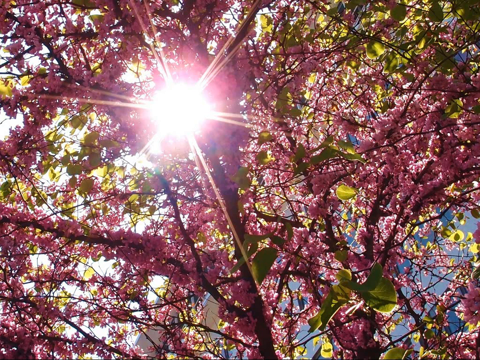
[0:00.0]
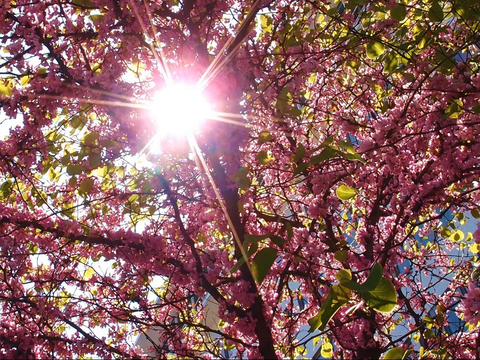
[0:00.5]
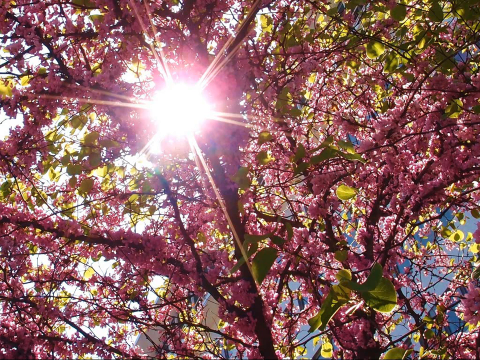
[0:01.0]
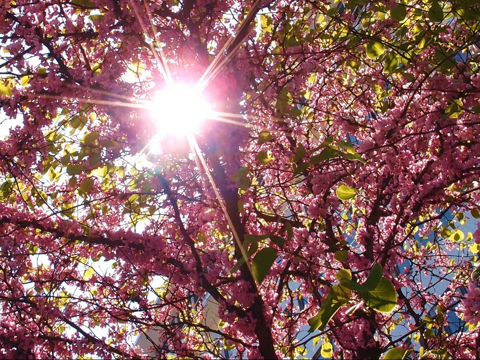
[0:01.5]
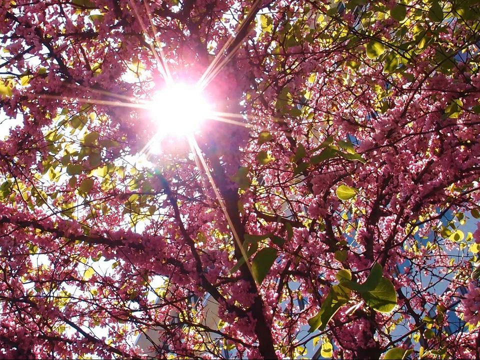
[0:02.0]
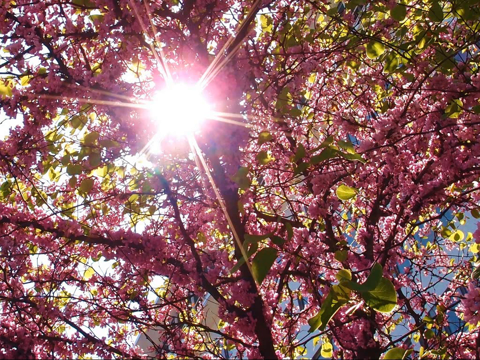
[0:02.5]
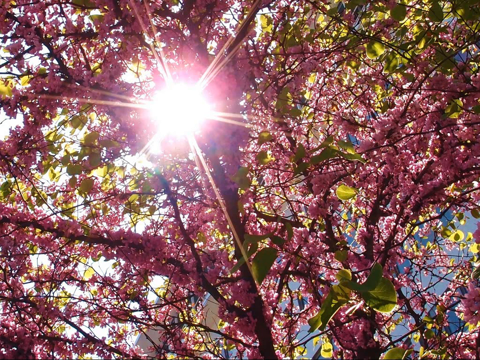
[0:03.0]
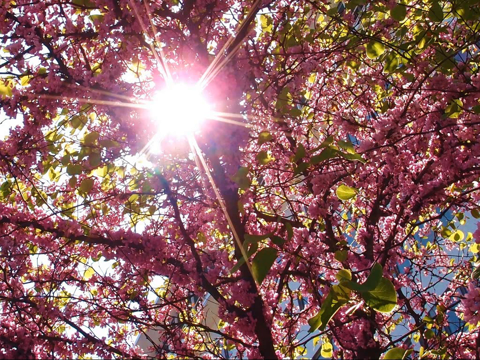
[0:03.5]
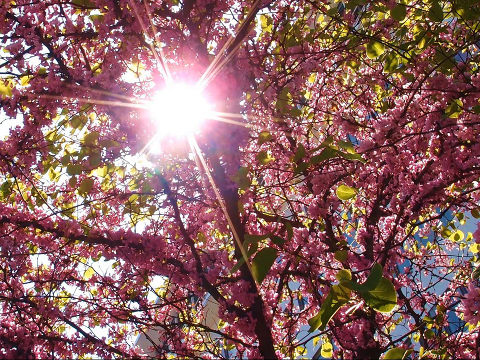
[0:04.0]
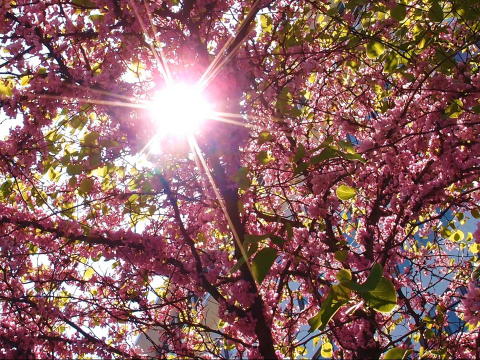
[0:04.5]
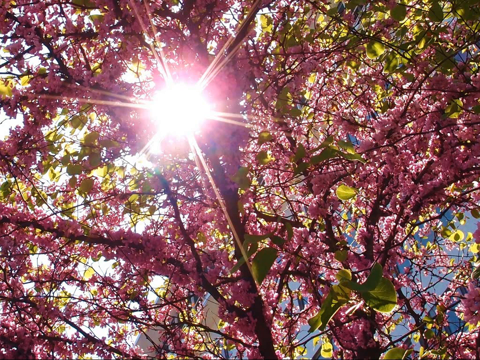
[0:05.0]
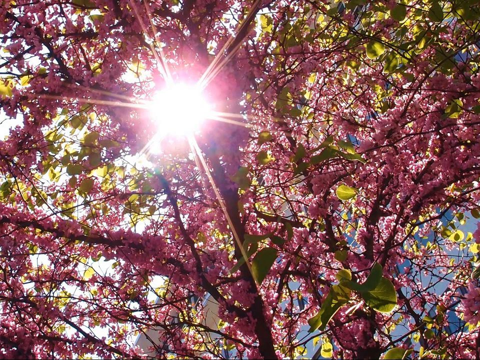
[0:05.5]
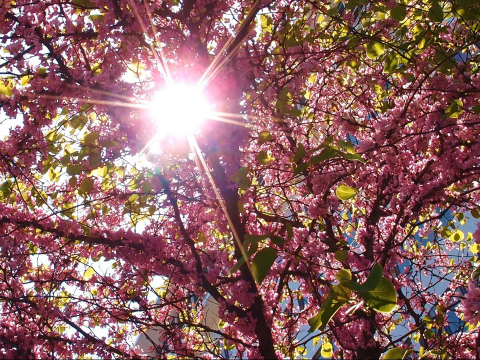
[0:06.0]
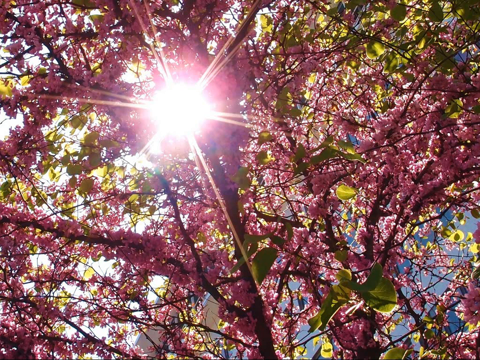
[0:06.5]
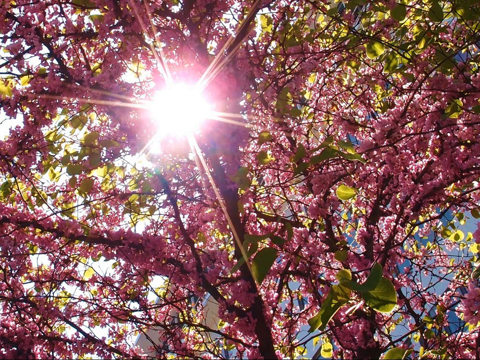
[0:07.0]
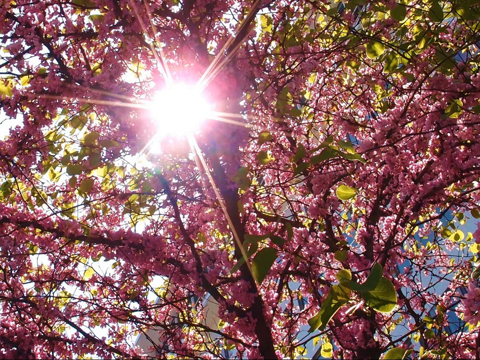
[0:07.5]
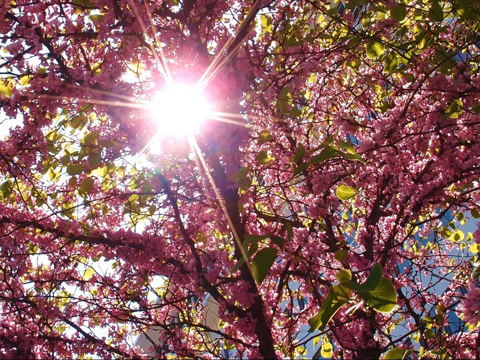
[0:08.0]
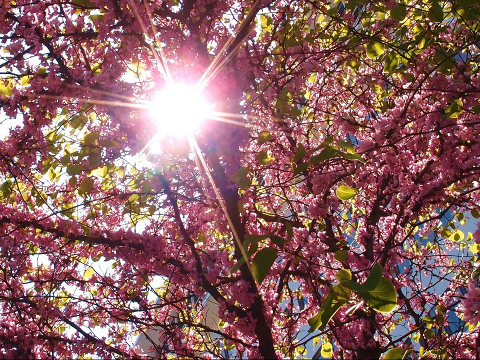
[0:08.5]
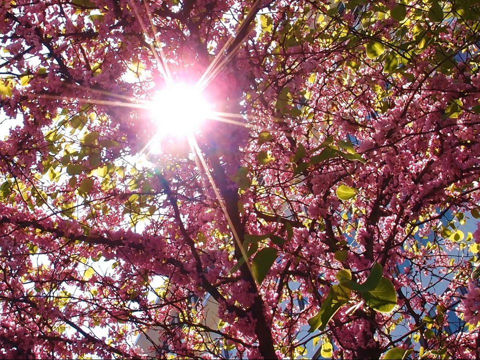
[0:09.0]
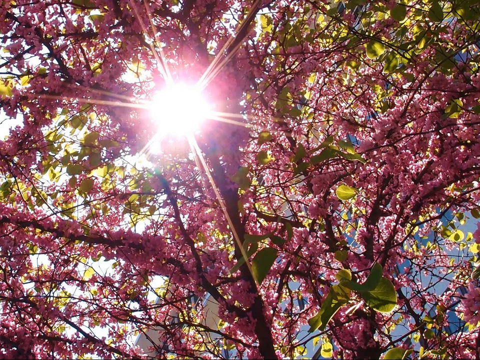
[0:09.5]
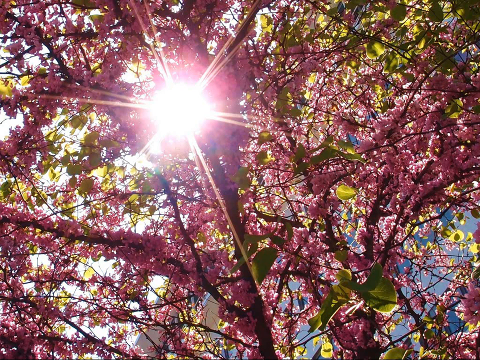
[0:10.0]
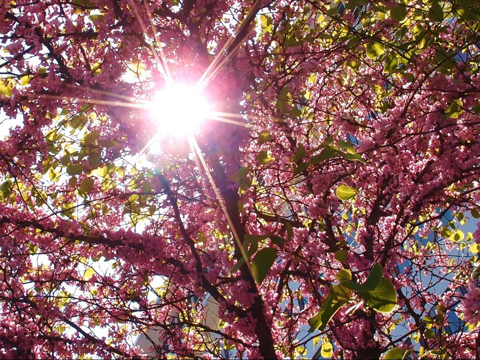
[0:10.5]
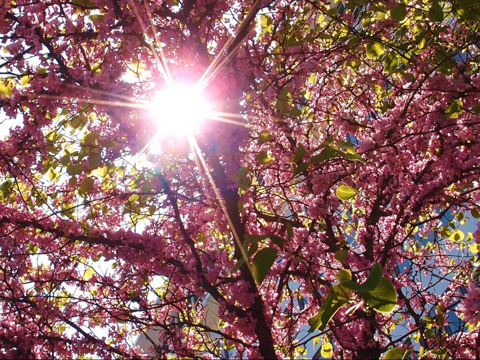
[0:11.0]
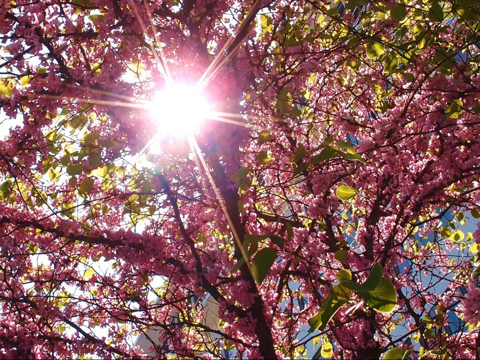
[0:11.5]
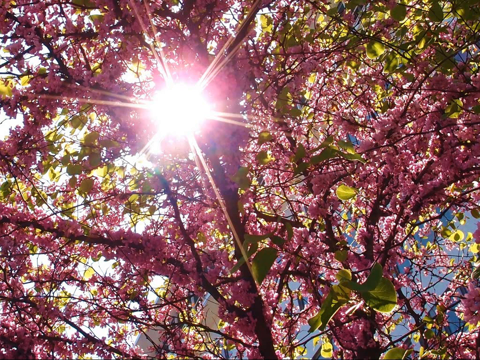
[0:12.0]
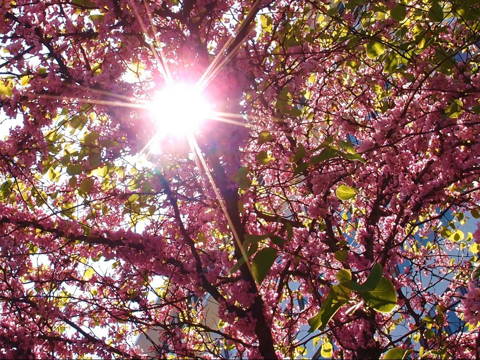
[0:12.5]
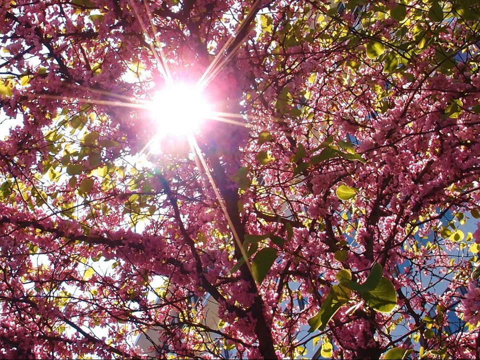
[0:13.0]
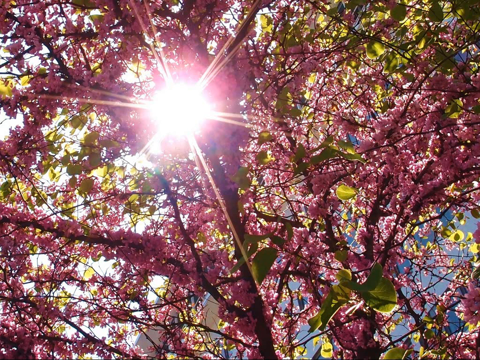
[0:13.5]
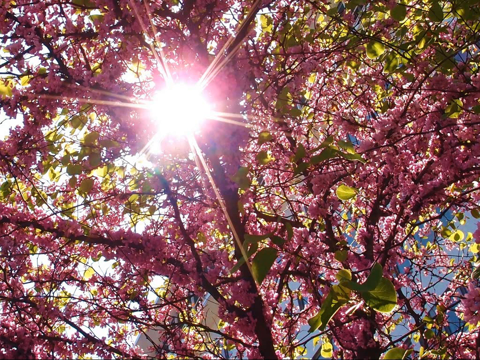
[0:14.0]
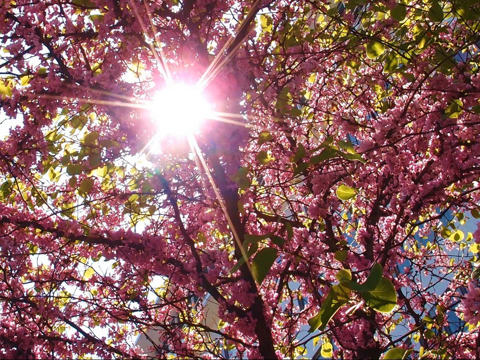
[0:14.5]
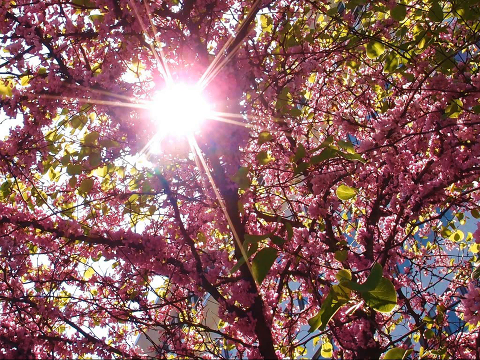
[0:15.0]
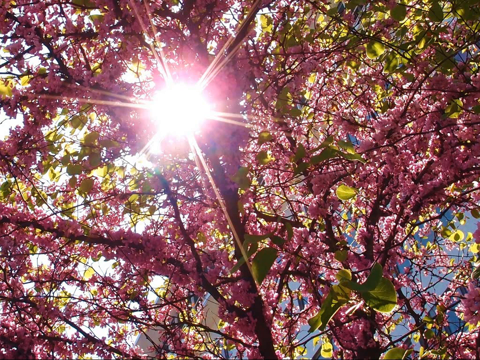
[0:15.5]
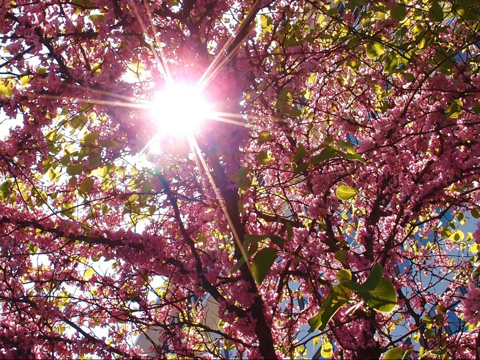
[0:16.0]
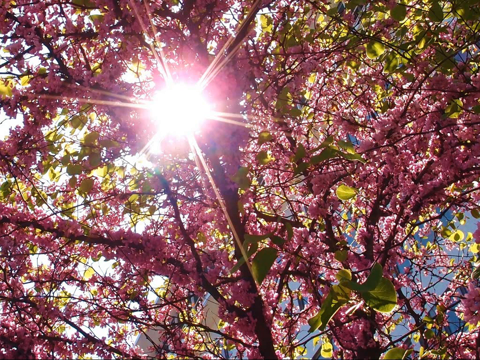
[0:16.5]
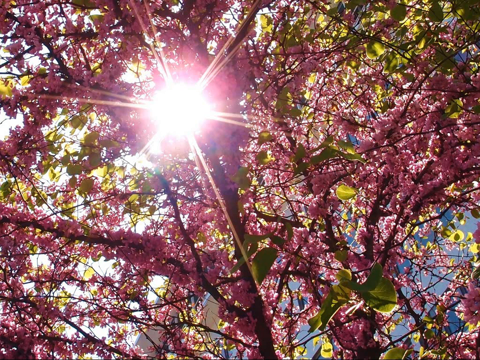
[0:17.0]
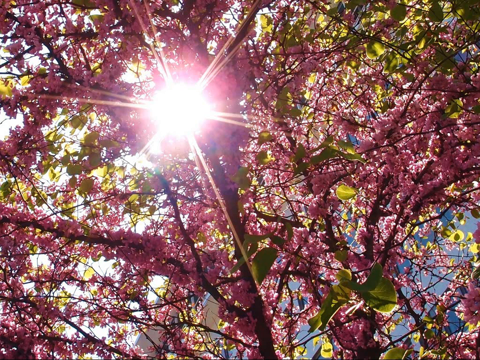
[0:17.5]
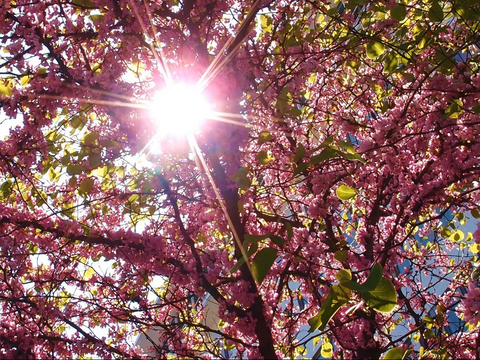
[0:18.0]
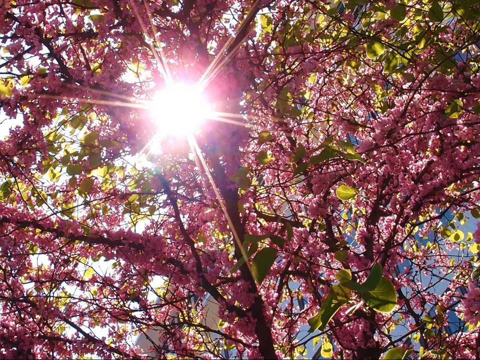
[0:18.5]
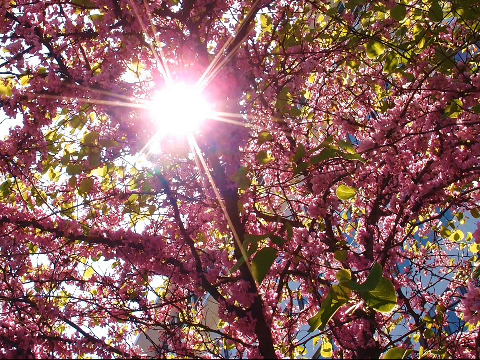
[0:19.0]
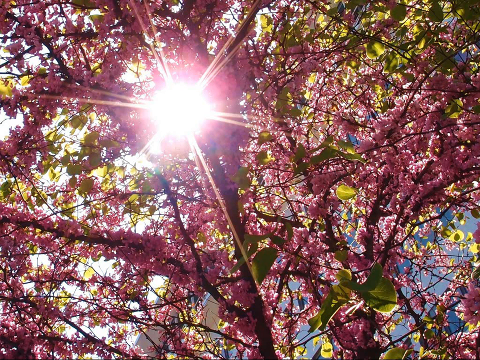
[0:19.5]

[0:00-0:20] The sun peers down through a tree, shining incredibly bright and white. It sits toward the top of the frame, in the center but slightly toward the left and a little upward, and lines of sunlight spread out from it through the tree. The scene is completely still; nothing moves. The tree has many what look like flowers, light purple in color, along with green leaves and thin, dark brown branches. Through the empty spaces between the flowers, leaves and branches, little patches of light blue sky are visible.